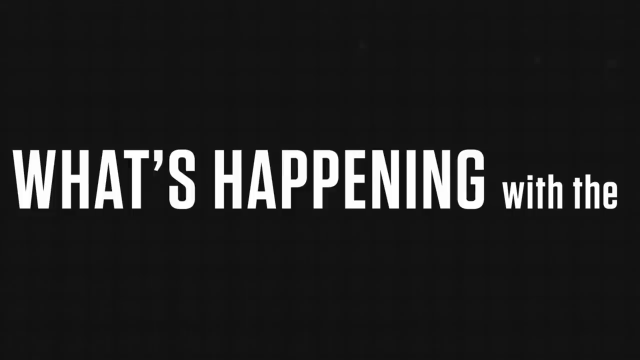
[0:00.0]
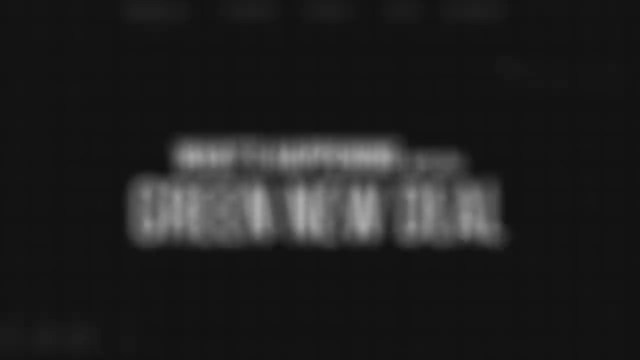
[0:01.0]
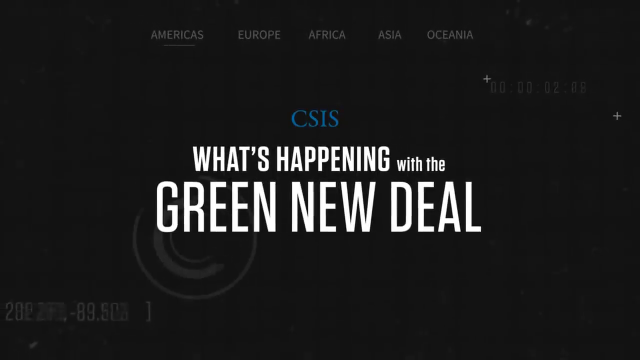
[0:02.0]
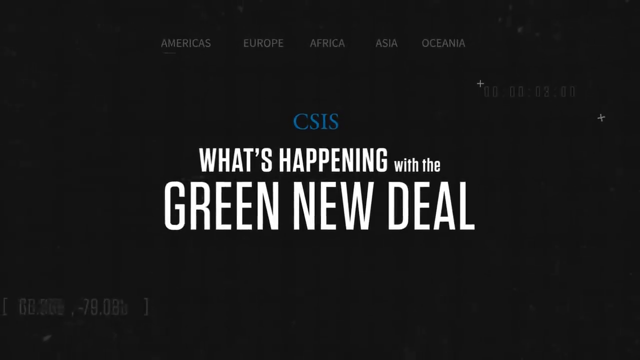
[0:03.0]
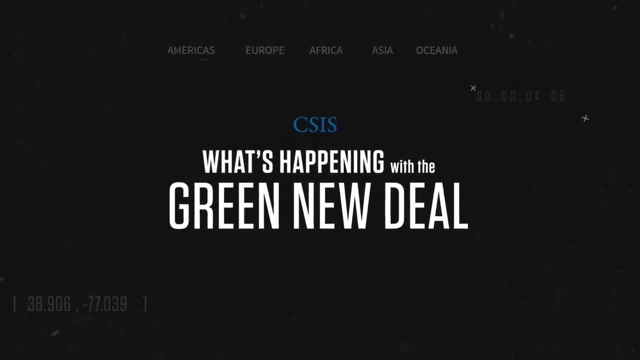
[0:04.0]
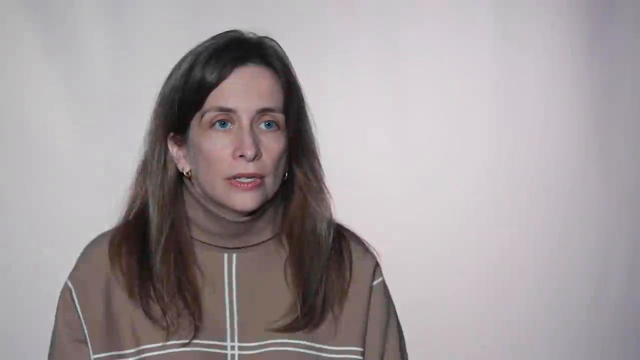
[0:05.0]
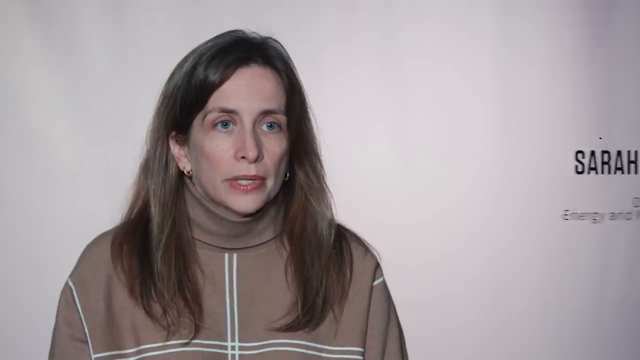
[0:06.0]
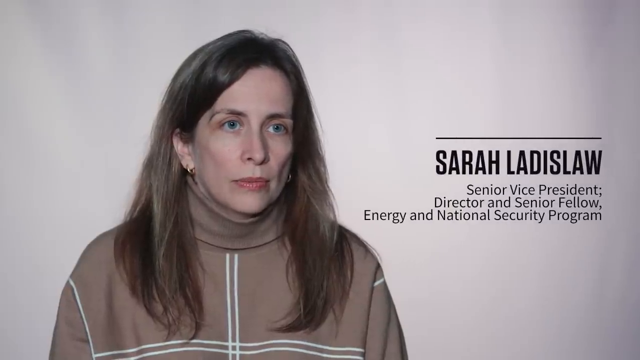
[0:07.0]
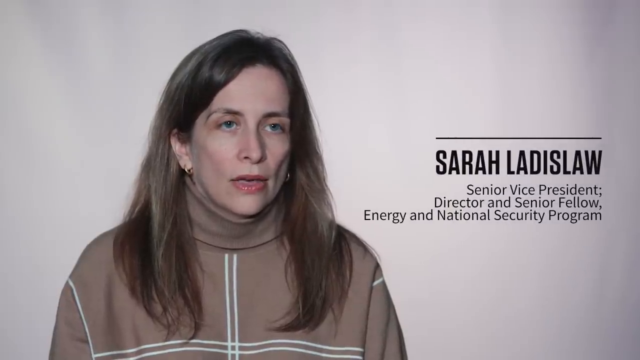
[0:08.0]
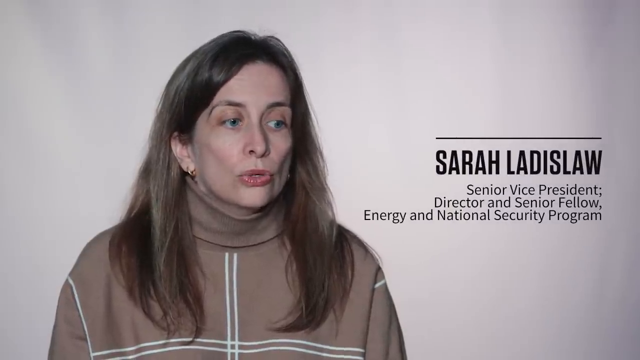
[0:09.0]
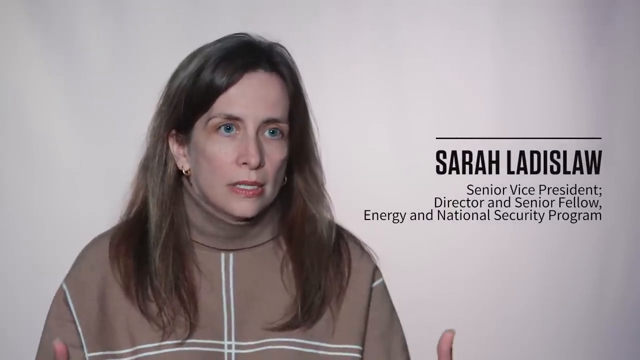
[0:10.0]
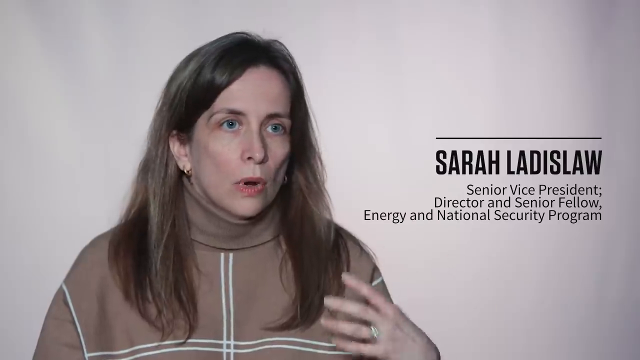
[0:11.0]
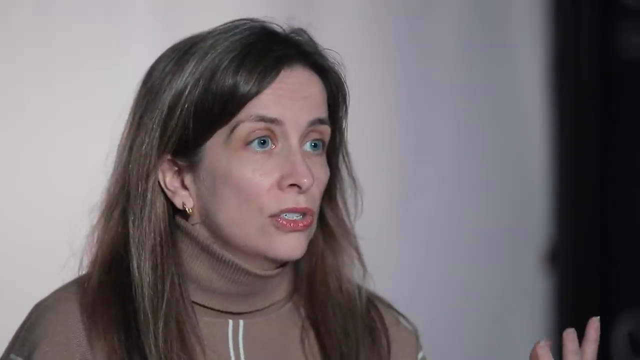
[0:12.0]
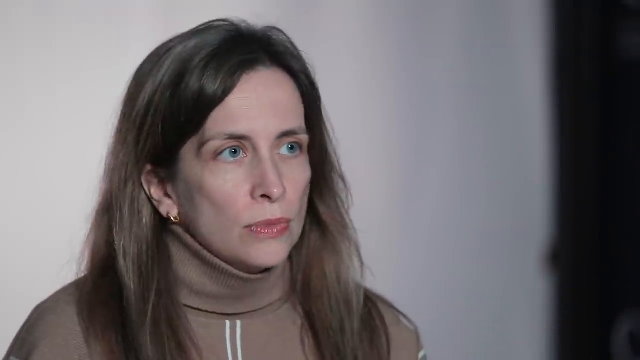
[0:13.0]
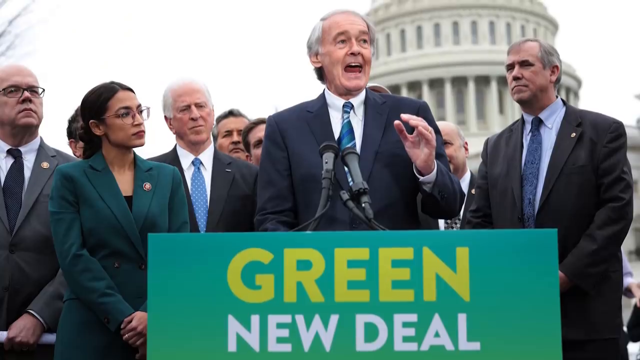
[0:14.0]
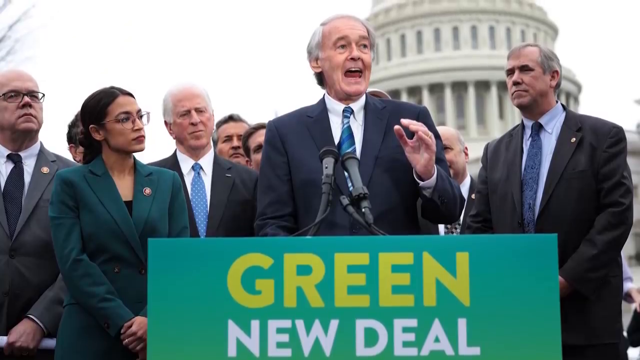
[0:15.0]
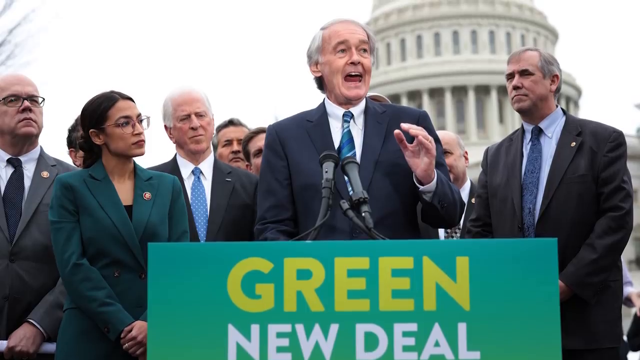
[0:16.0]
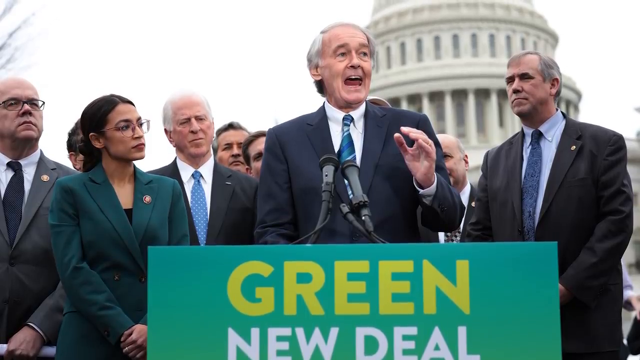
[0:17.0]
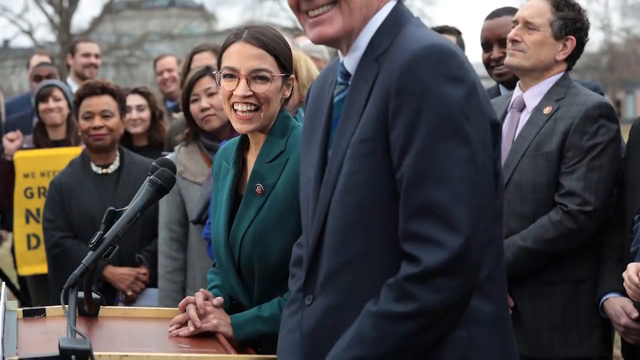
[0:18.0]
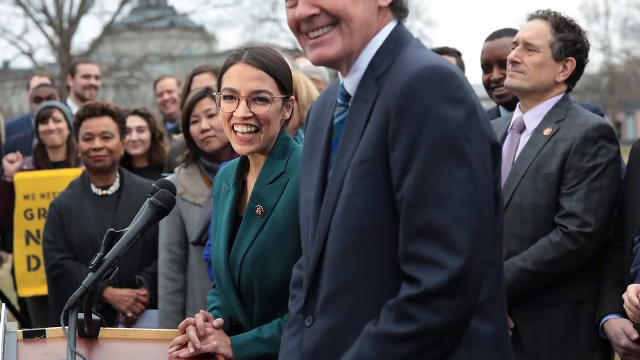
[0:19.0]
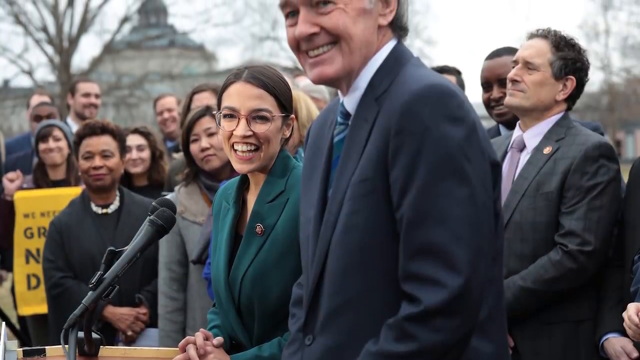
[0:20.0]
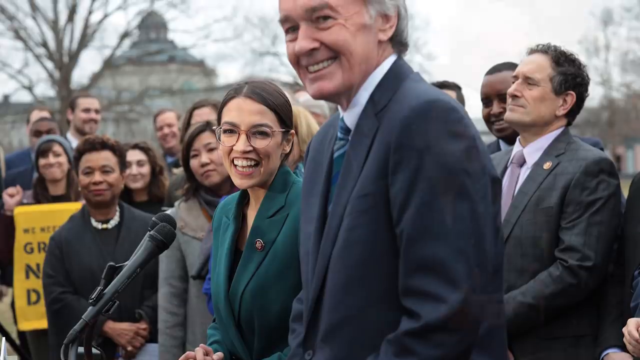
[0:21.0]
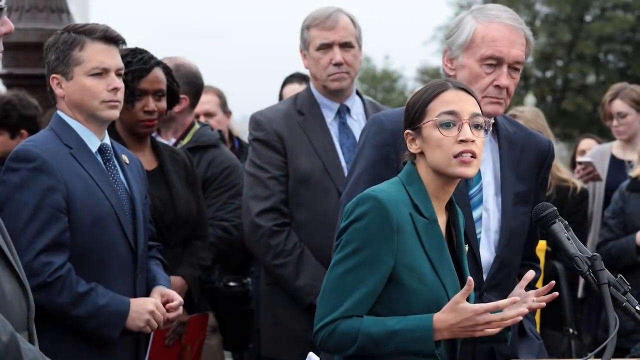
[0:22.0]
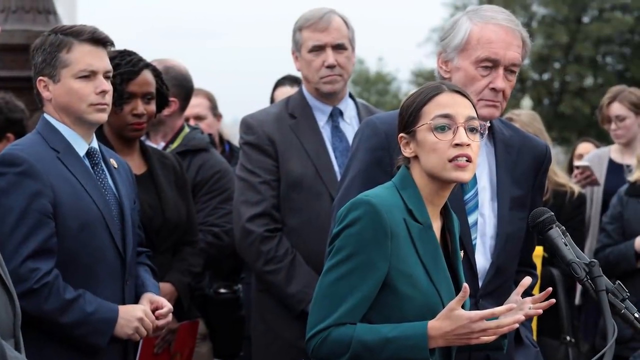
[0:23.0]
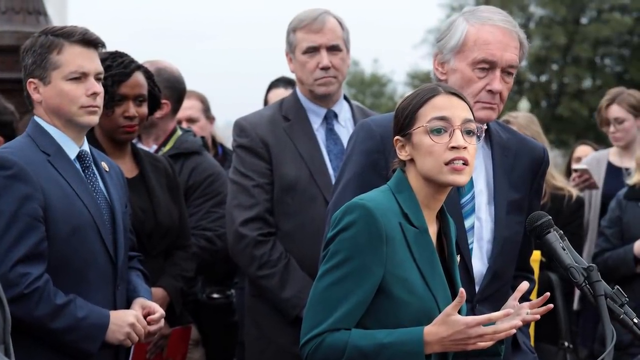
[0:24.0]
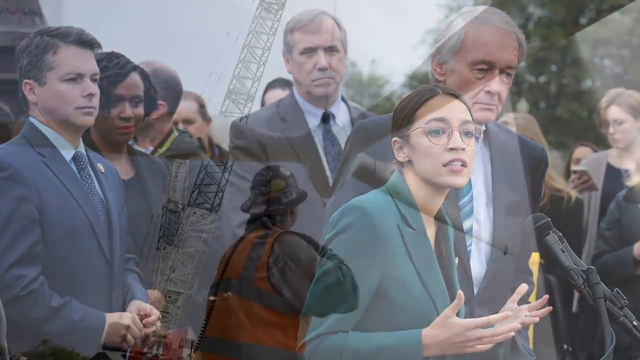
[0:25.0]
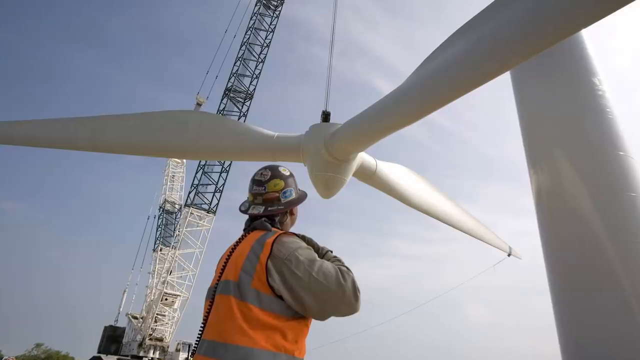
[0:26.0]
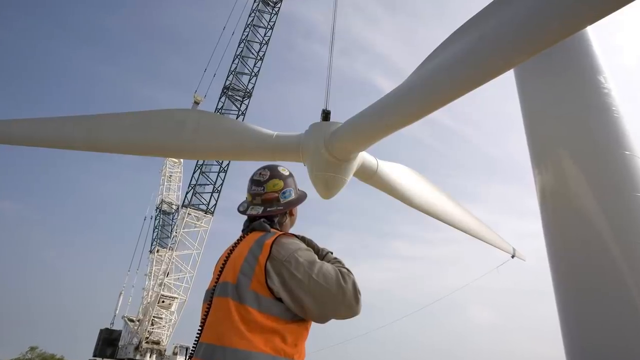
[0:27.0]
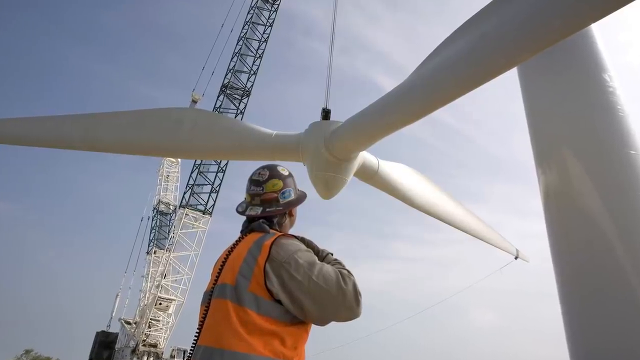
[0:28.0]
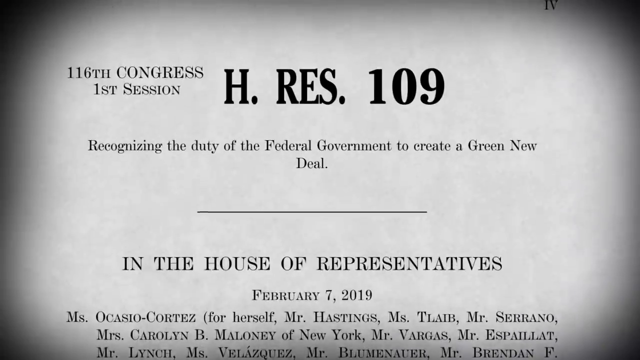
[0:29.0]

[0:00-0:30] A black screen shows white text in the center reading "what's happening with the". Over top of the next screen, text reads "Americas, Europe, Africa, Asia, Oceania", and just over top of that, "CSIS" appears in blue. Some faded letters in the background are hard to read. Against a light gray background, a white woman on the left side wears a gray turtleneck-type top with white lines running down the front center and across. She has red lipstick, a white complexion and long brown hair. As she talks, black lettering appears on the right side, with a black line above it, reading "Sarah Laidslaw, senior vice president, director, and senior fellow, Energy and National Security Program", and she talks with her hands. The next image shows a group of House representatives. In front is a green sign with the word "green" in green letters and "New Deal" in white letters below it. There is a white man in a gray suit among a number of other people, and a woman on the left side wears a green jacket. The round, columned House of Representatives building is in the background under a white sky. Another picture shows the same representatives smiling for the cameras: an older man on the right with white hair, a gray suit and a white collared shirt, with a number of other men and women in the background, all smiling for the photograph. The white sky is at the top and gray trees are visible. Next, a female senator or representative with brown-rimmed glasses, black hair and a green coat has a black microphone in front of her. Her hands are in front of her, and other representatives in suits, men and women, are behind her.